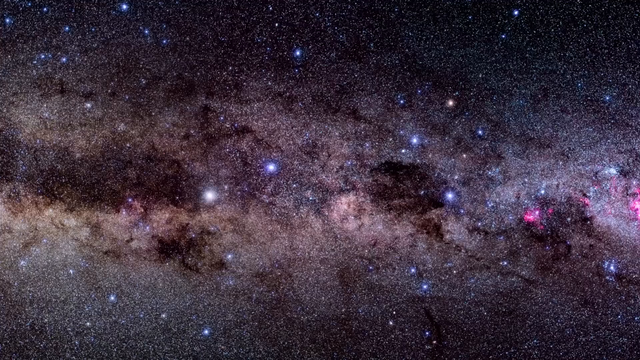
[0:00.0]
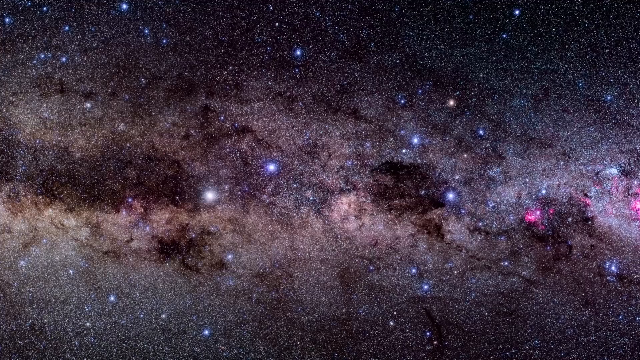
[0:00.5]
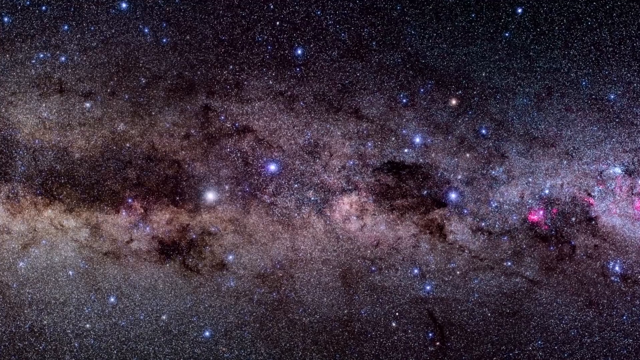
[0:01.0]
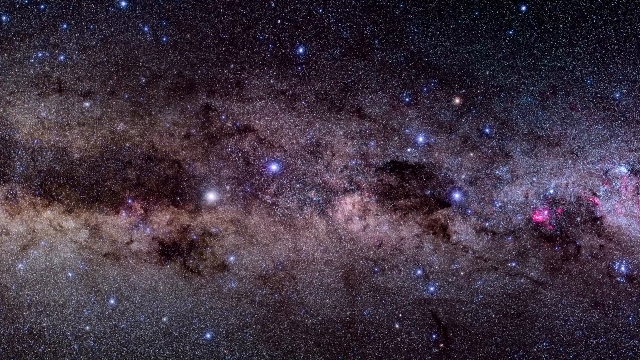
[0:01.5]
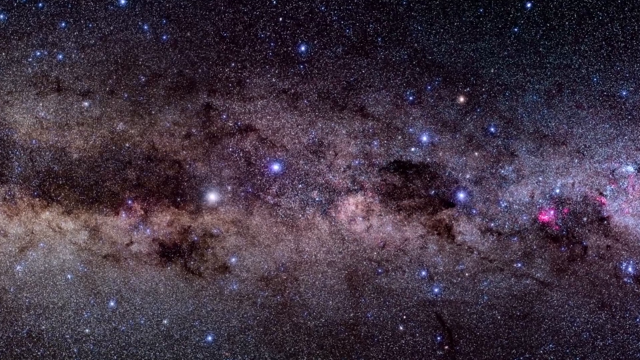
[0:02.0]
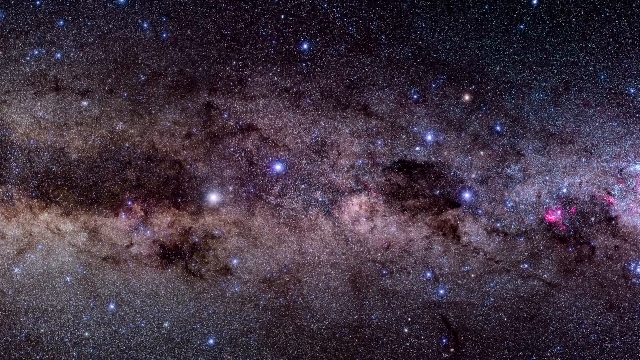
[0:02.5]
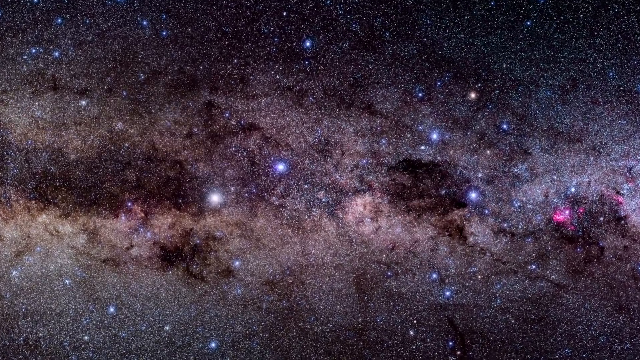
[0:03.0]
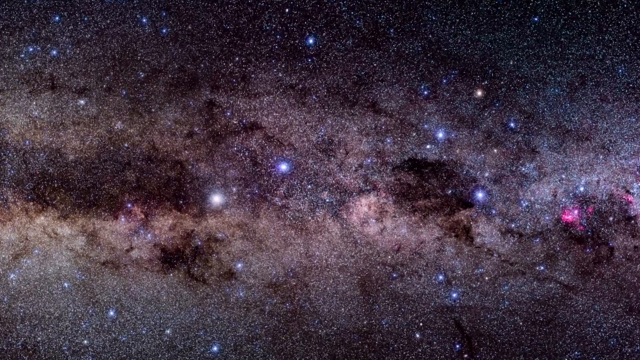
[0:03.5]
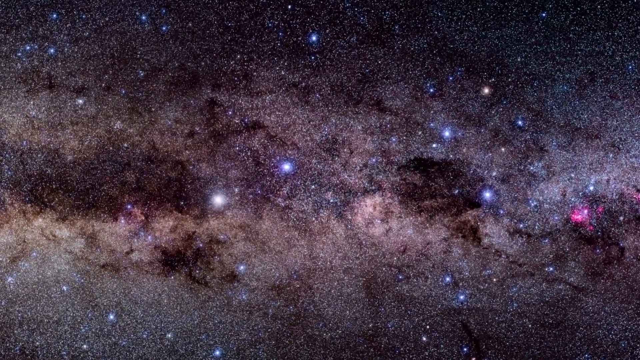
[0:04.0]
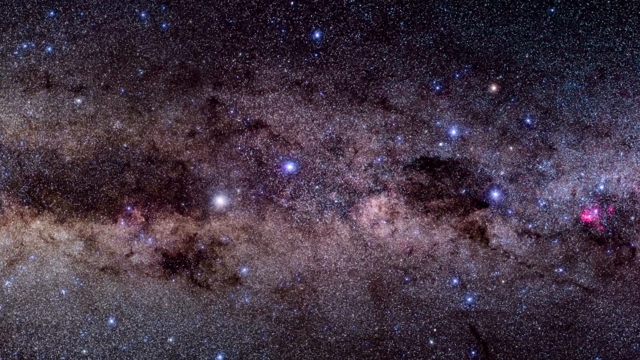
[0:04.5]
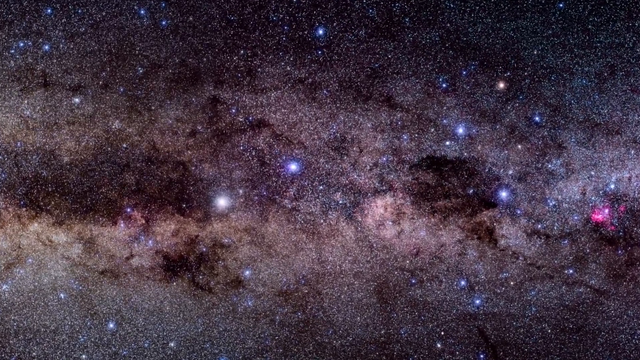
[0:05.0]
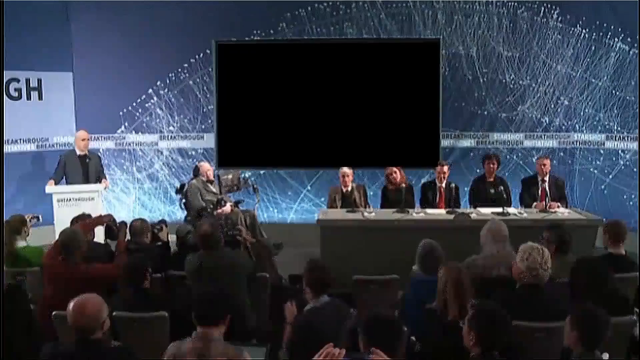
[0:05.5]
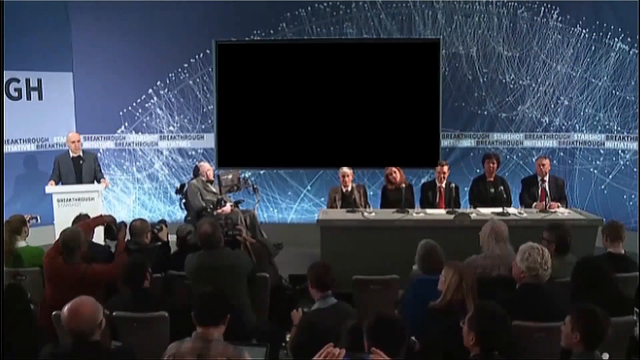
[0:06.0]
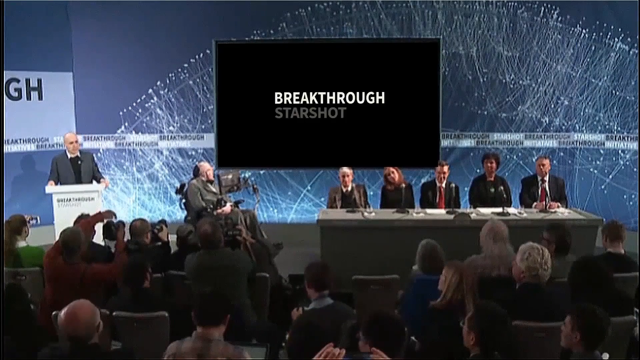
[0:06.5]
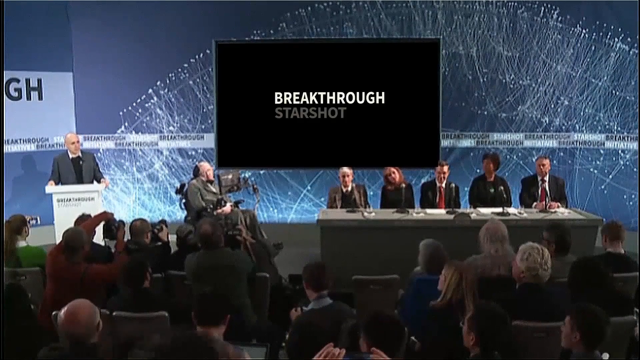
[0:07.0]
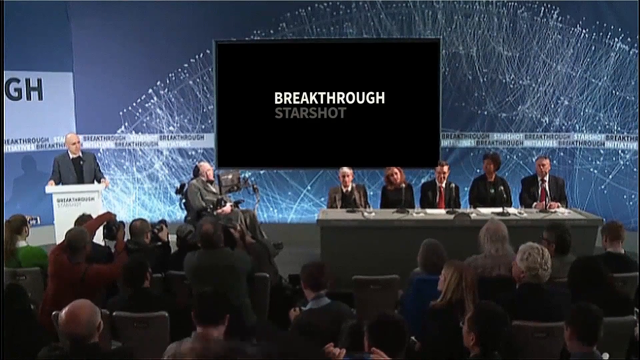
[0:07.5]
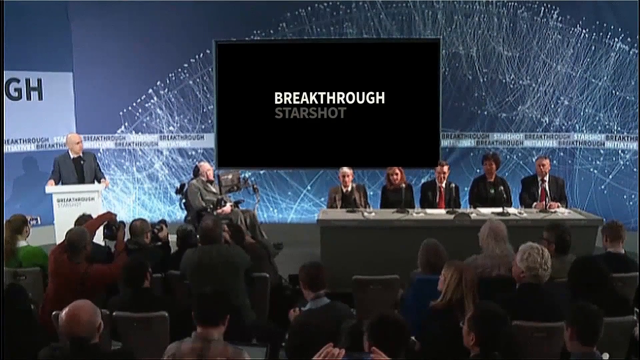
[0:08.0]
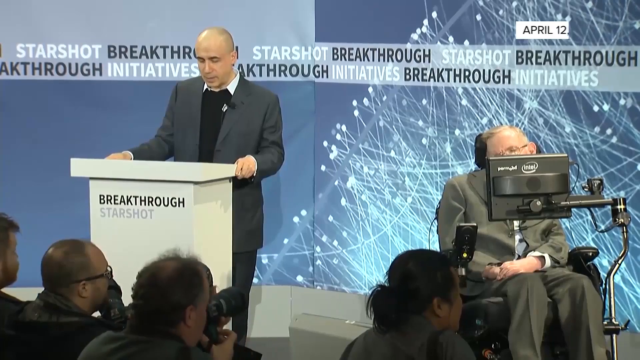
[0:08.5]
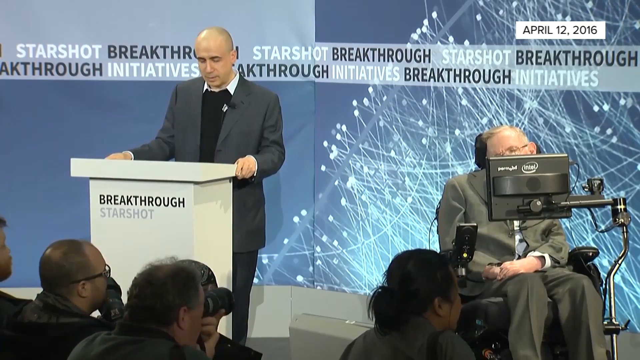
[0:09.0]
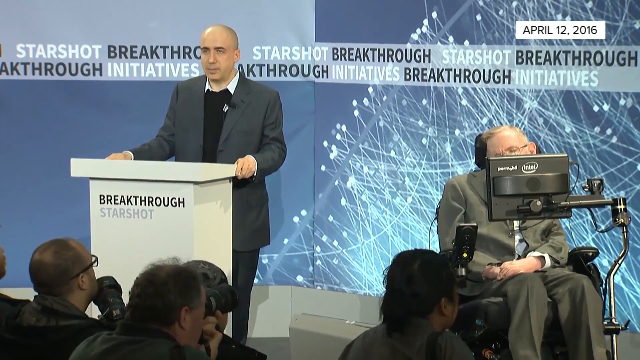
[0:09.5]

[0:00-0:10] A picture of the galaxy is zoomed in on, showing many very small stars scattered all over space, along with many bright blue and bright yellow stars and a sort of reddish hue on the right. After about five seconds, it transitions to a presentation-like setting where a group of people is sitting, apparently the main conference group. A man in a wheelchair is in the middle of the stage, apparently also part of that group. The man giving the main presentation is apparently on the left.